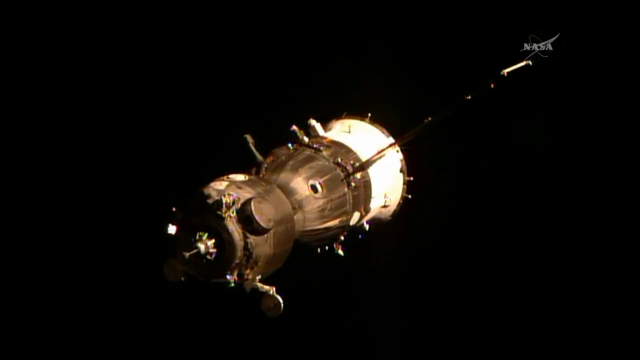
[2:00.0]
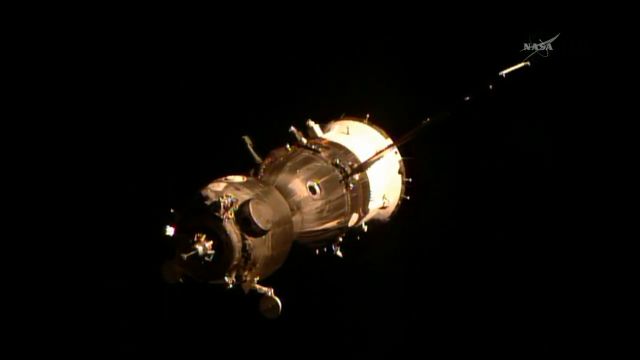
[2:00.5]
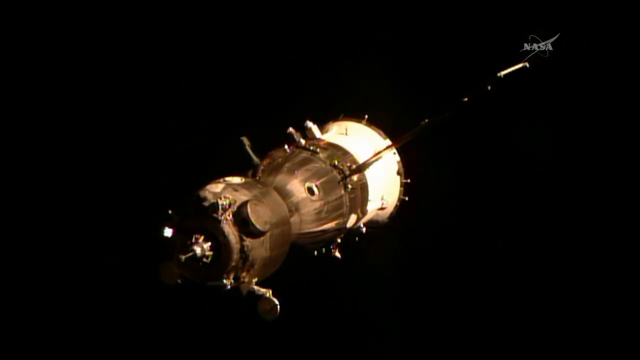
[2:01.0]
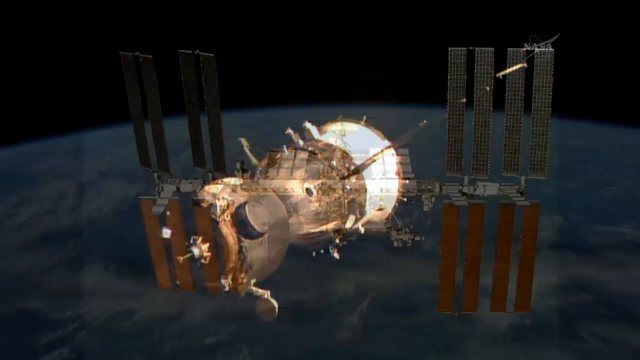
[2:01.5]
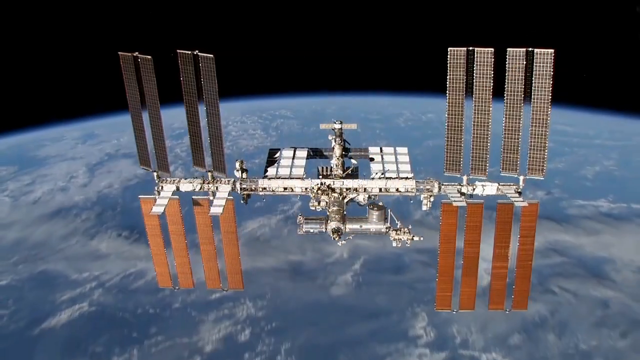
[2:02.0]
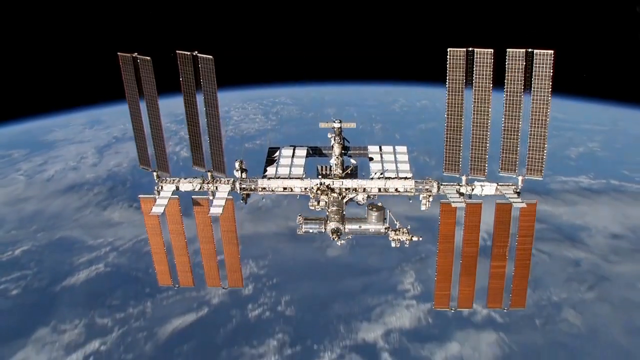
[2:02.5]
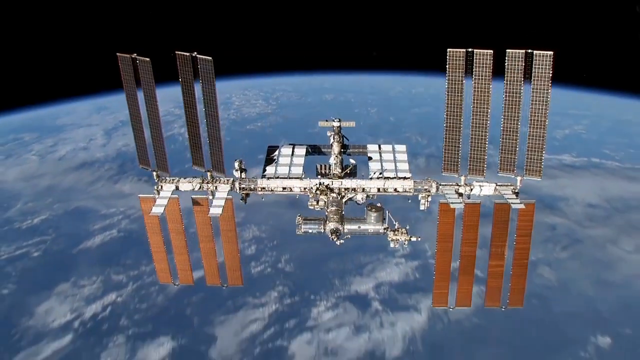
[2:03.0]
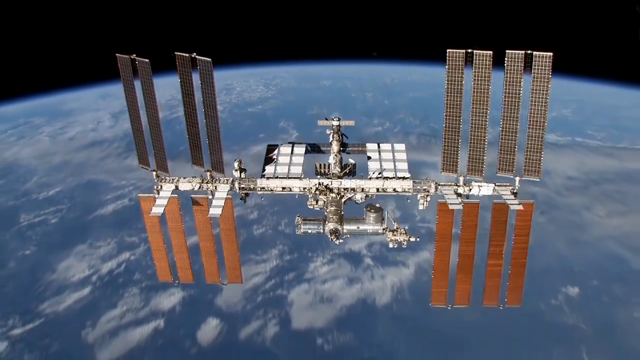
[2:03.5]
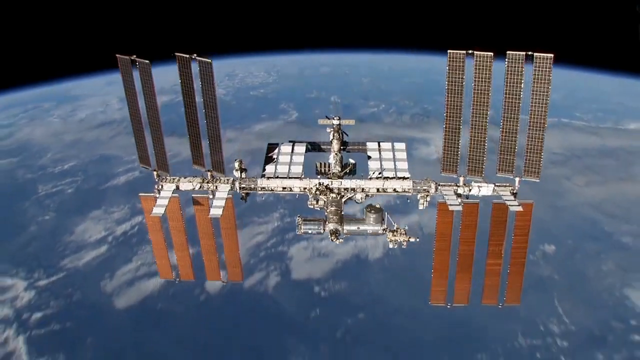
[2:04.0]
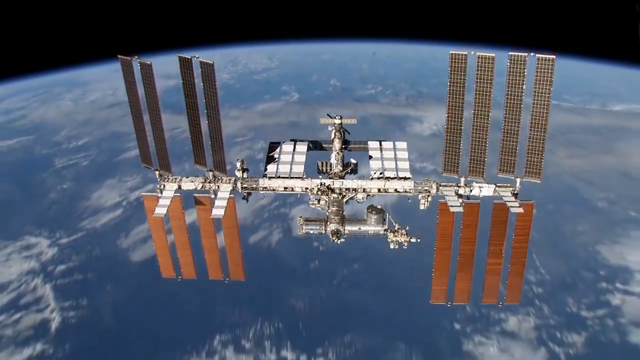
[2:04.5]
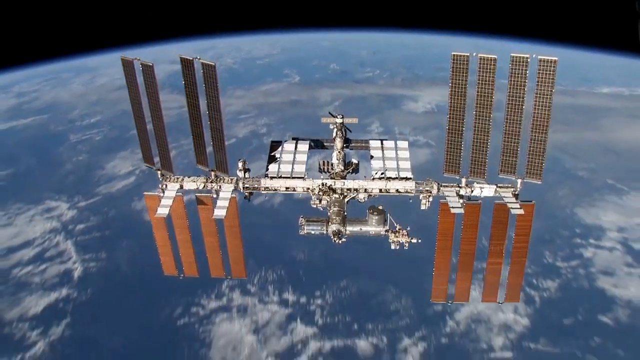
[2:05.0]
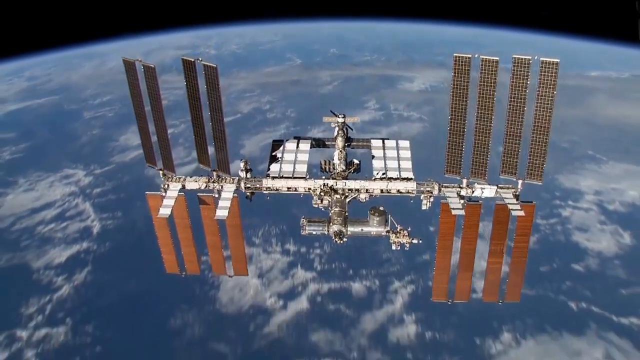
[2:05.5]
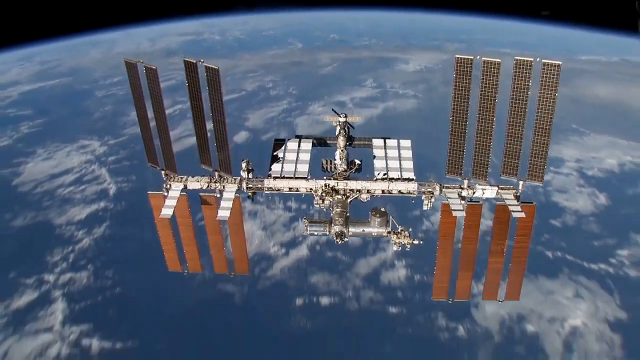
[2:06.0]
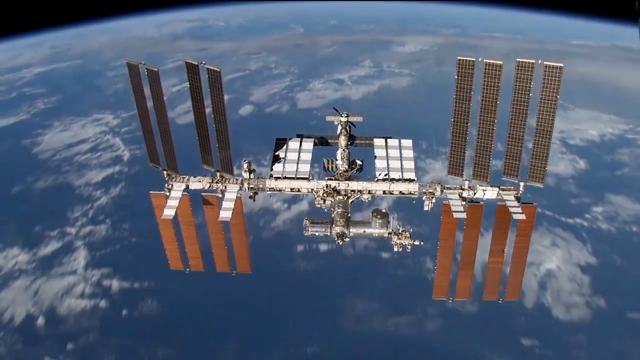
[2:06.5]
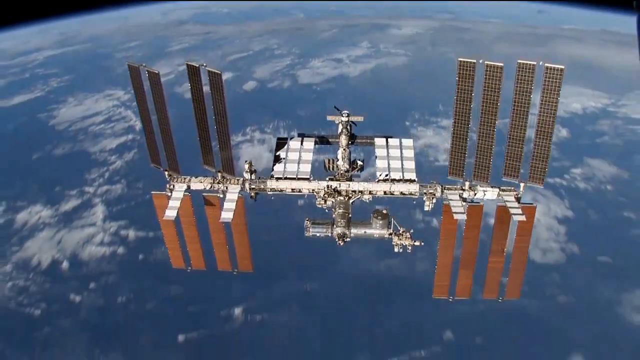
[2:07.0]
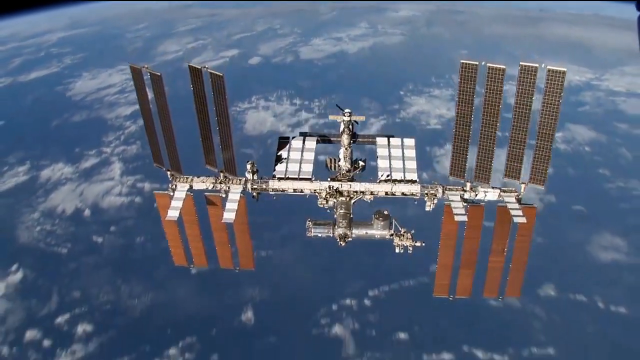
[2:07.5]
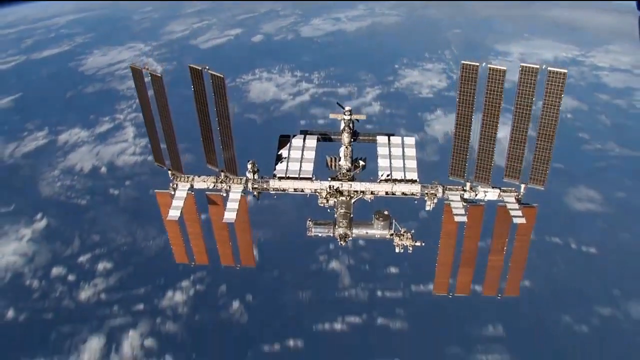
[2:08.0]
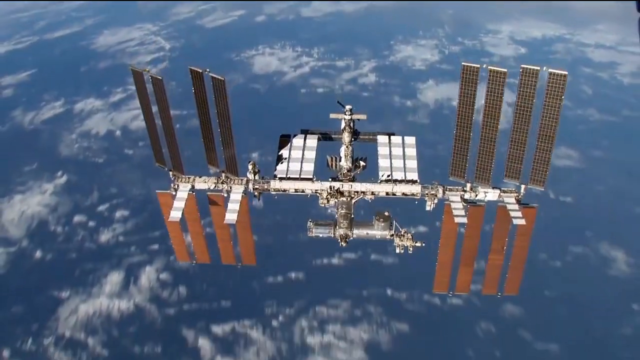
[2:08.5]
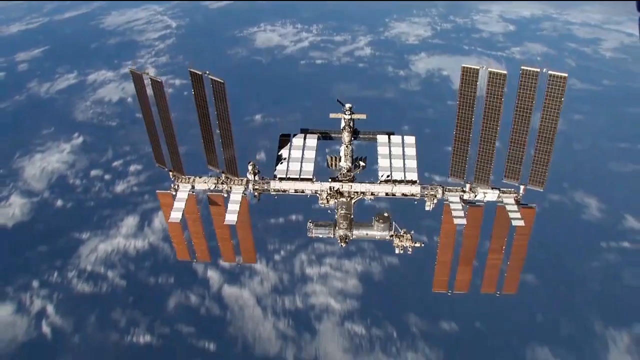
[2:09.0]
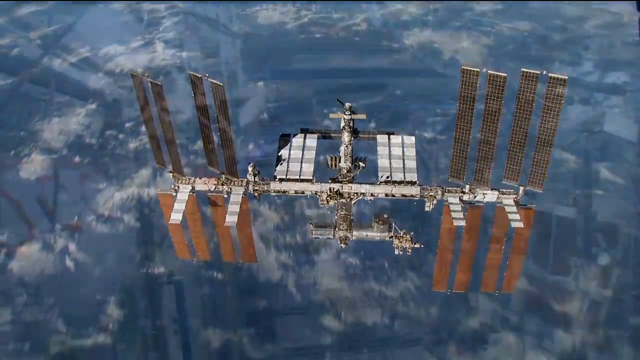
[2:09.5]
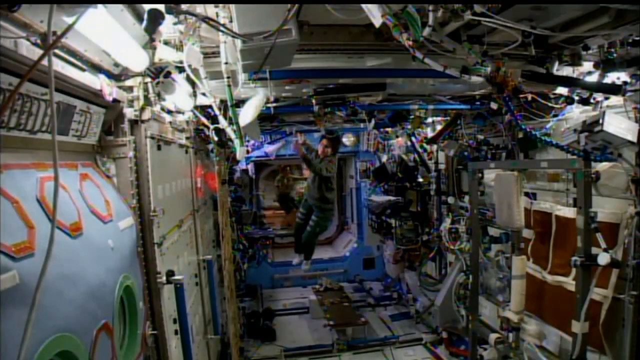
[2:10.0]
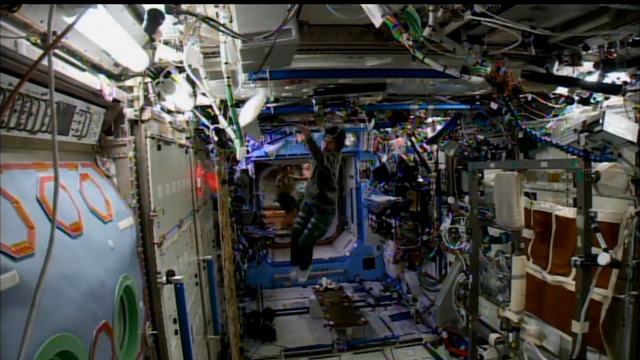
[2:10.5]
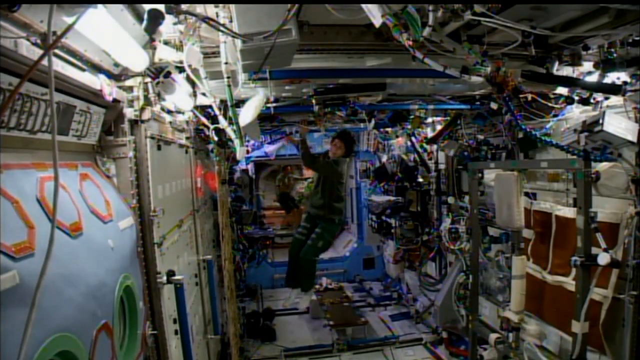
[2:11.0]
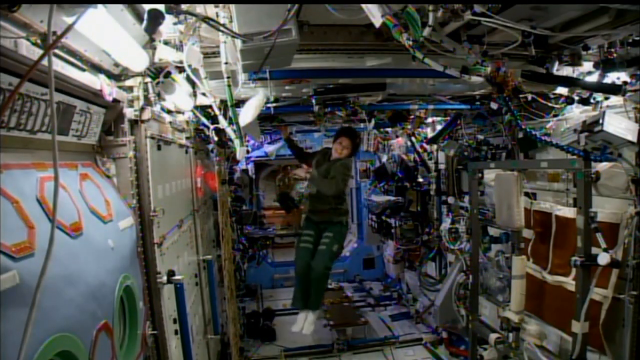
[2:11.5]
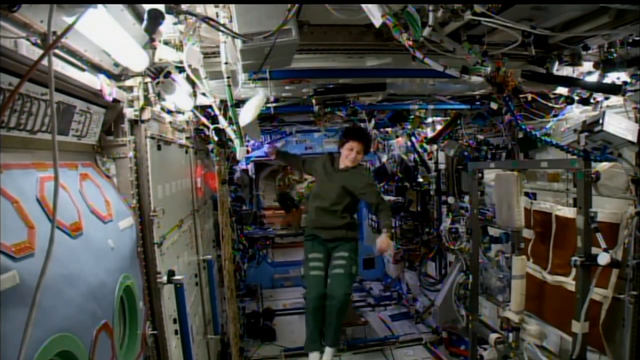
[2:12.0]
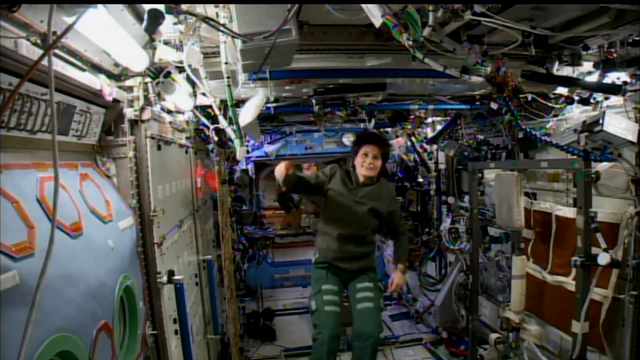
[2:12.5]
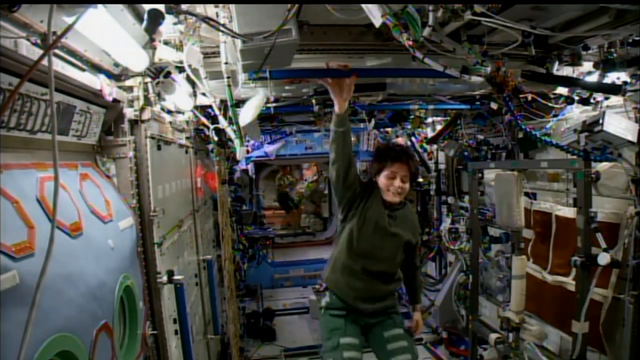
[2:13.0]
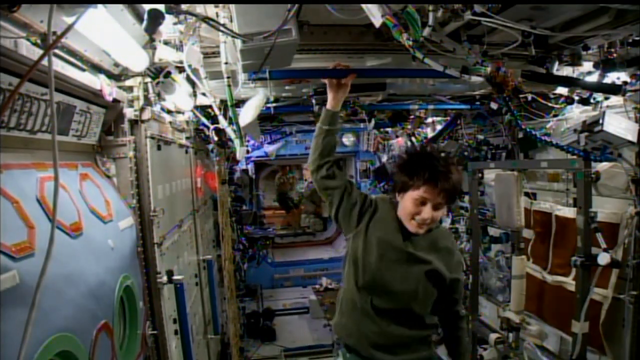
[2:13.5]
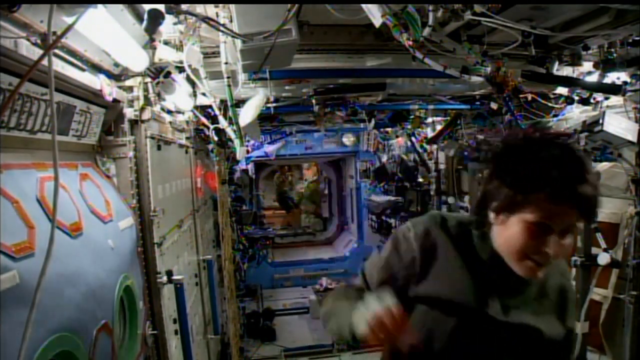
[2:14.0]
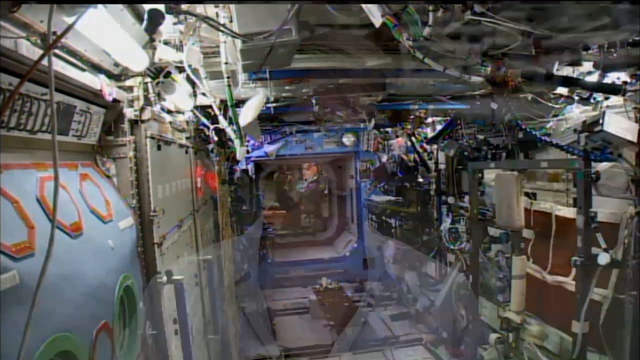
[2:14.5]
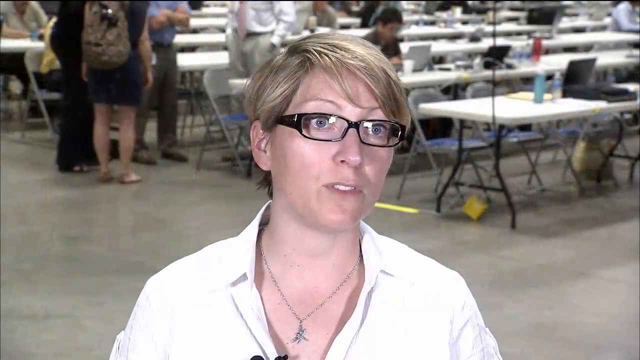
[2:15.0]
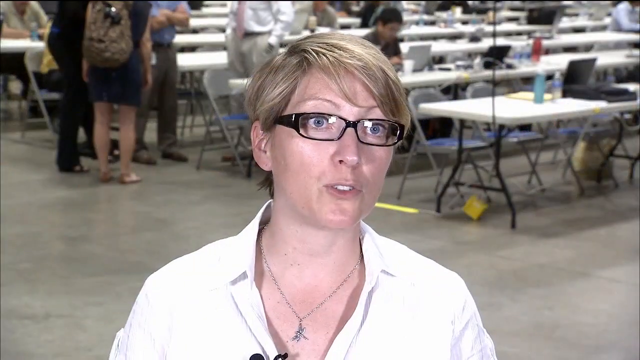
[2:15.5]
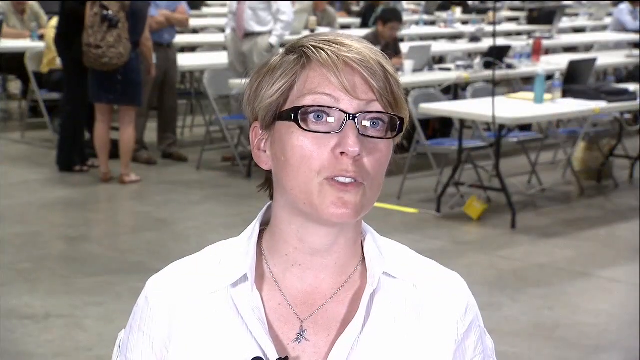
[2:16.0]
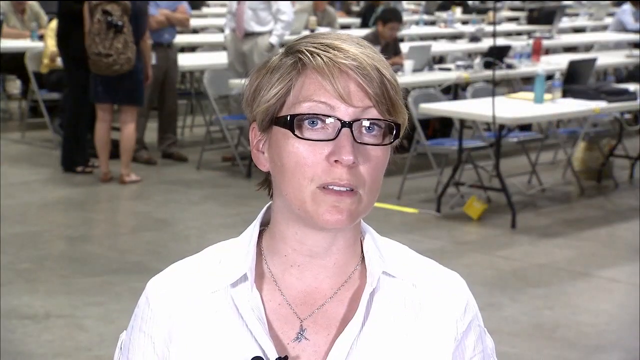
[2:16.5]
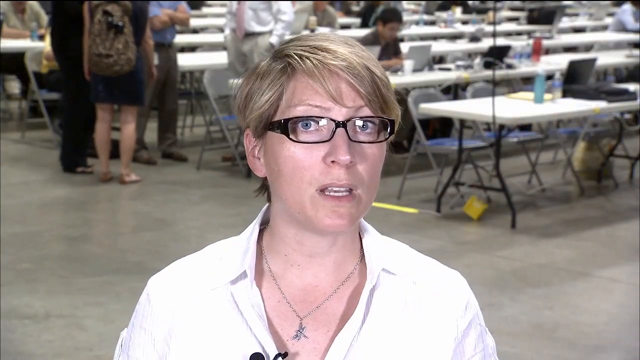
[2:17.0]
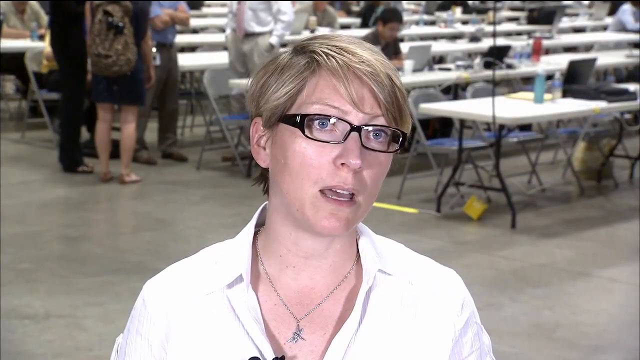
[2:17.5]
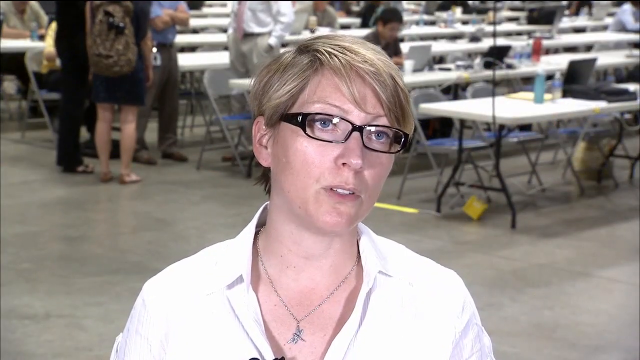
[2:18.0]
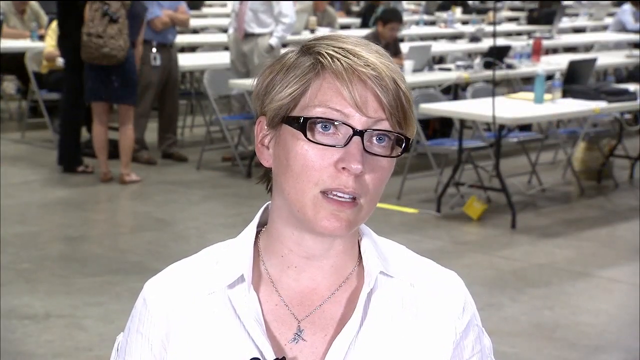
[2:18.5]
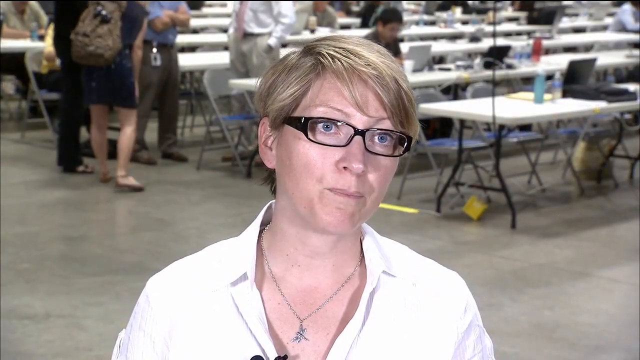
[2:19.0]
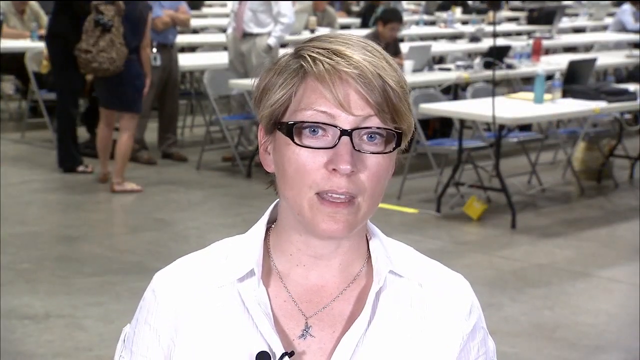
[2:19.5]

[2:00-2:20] On a solid black screen, a shiny brown satellite body is shown in the middle, with a pole coming out of its side bearing a small white antenna-looking thing. The scene cuts to a digital image of the Earth from space; the Earth is moving, and a very long, bright, shiny silver satellite moves over the top of it. On its left and right ends there are eight panels, two on top and two on the bottom on each side. Next, a person with black hair in a green jumpsuit floats through a cylinder lined with wires, buttons and cables; it looks like it could be the inside of a space station. The scene then cuts to a woman standing in a large room with white tables, speaking to the camera. She has short blonde hair and wears black-rimmed glasses and a white button-up shirt with the top couple of buttons unbuttoned.